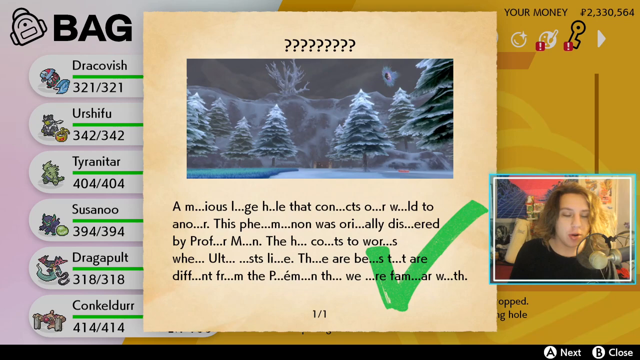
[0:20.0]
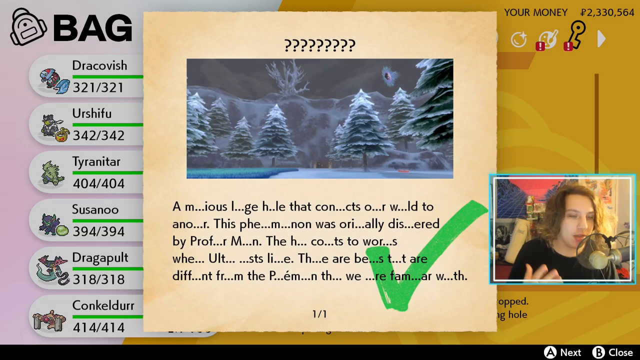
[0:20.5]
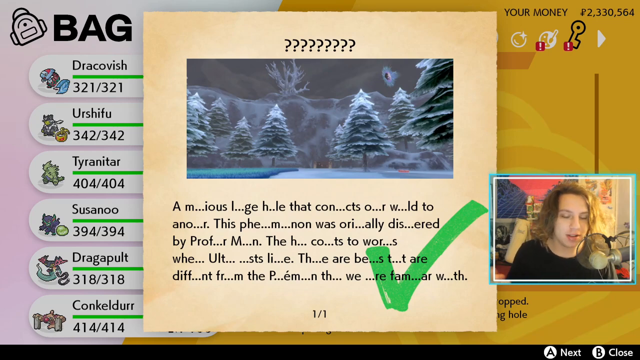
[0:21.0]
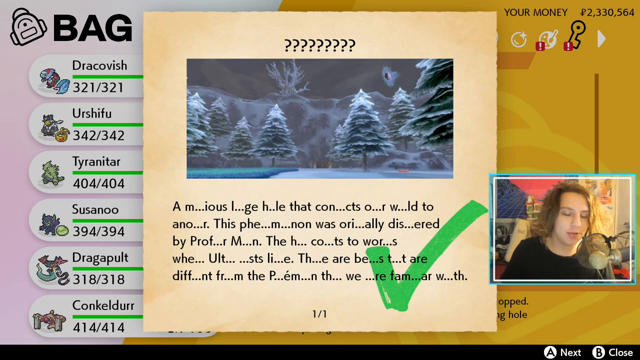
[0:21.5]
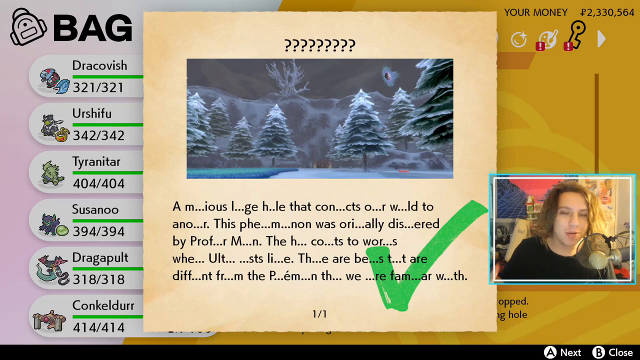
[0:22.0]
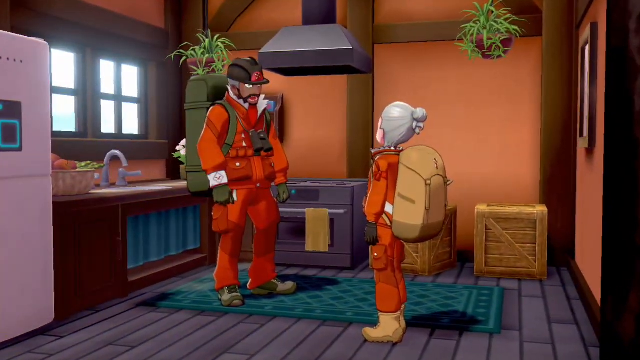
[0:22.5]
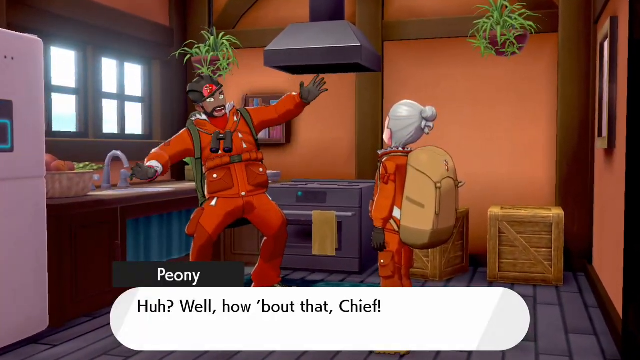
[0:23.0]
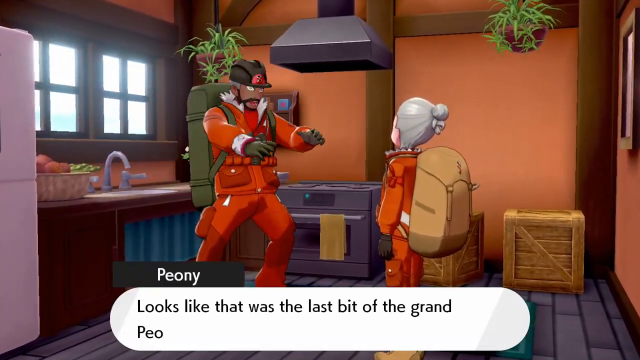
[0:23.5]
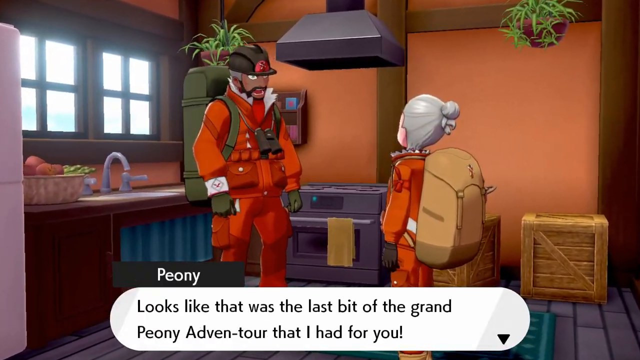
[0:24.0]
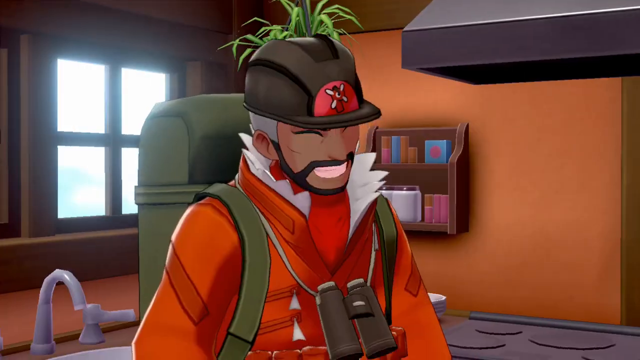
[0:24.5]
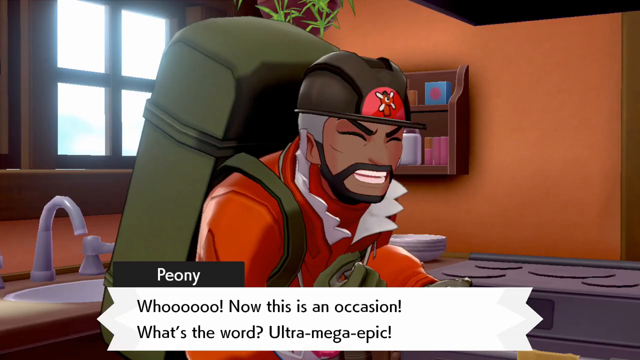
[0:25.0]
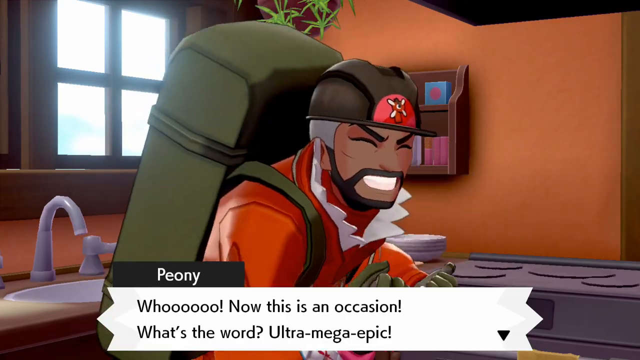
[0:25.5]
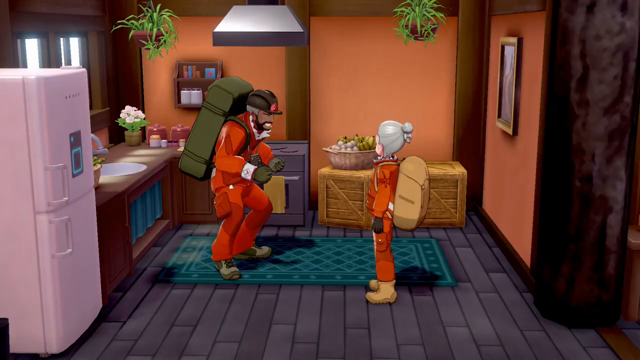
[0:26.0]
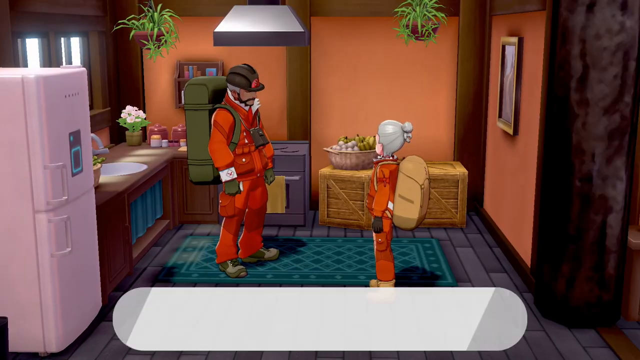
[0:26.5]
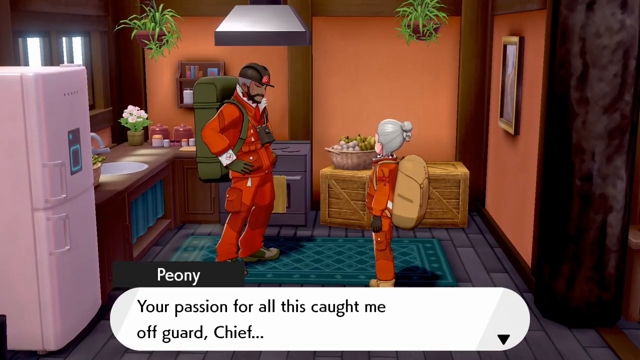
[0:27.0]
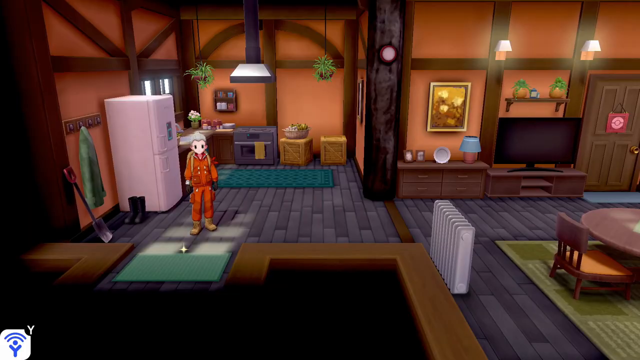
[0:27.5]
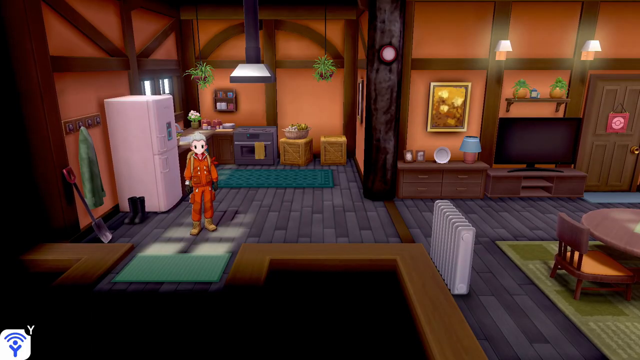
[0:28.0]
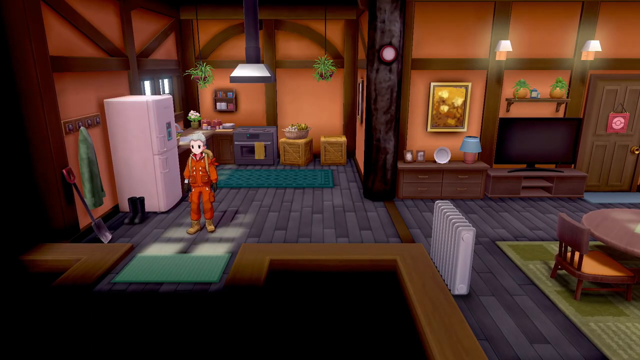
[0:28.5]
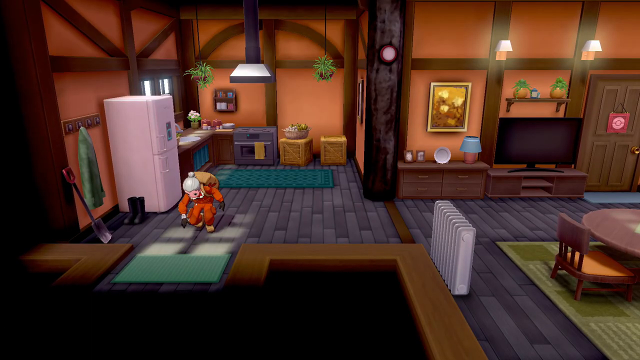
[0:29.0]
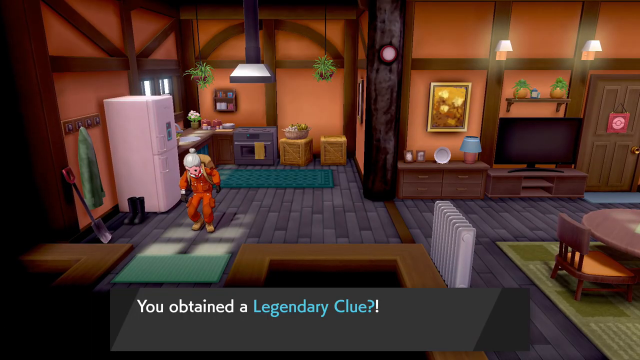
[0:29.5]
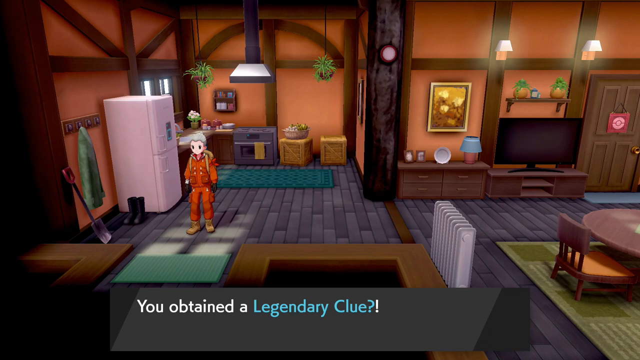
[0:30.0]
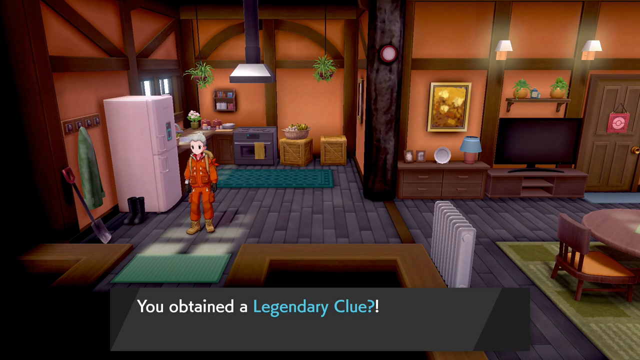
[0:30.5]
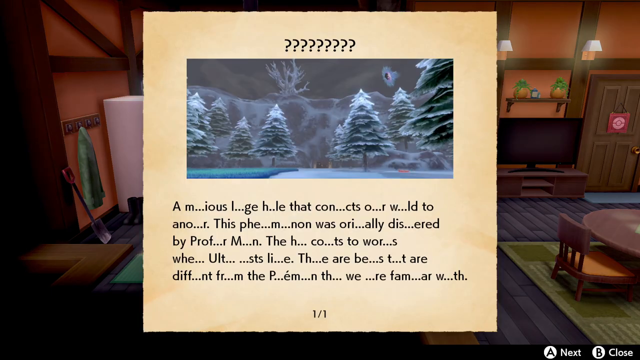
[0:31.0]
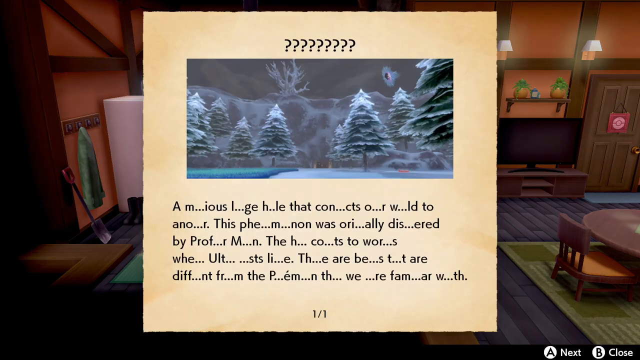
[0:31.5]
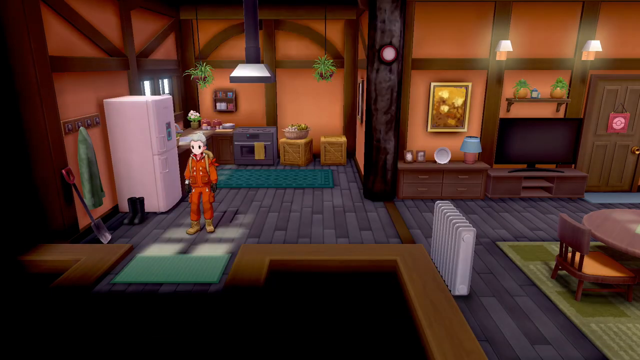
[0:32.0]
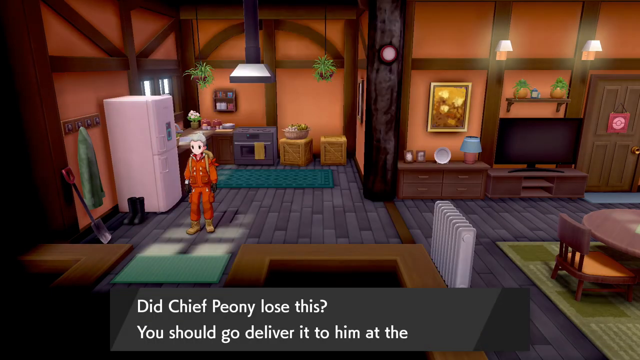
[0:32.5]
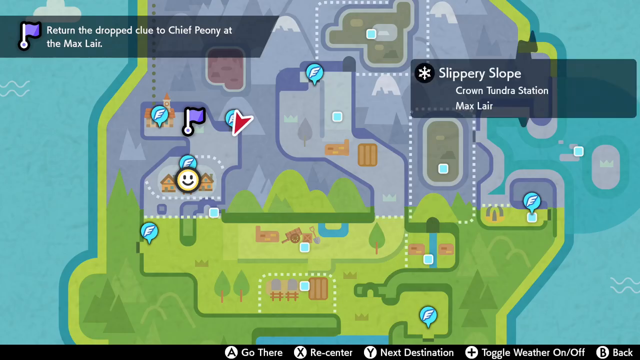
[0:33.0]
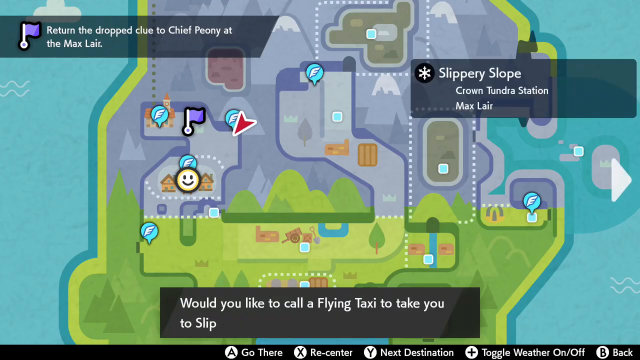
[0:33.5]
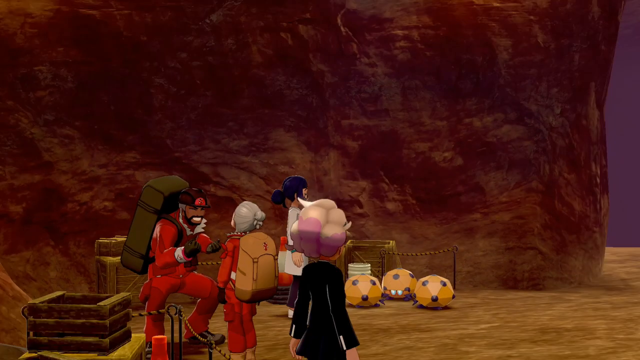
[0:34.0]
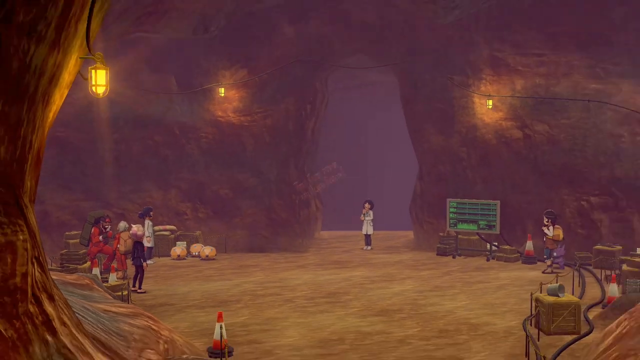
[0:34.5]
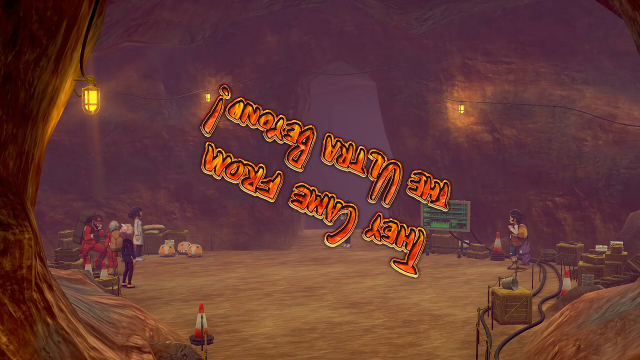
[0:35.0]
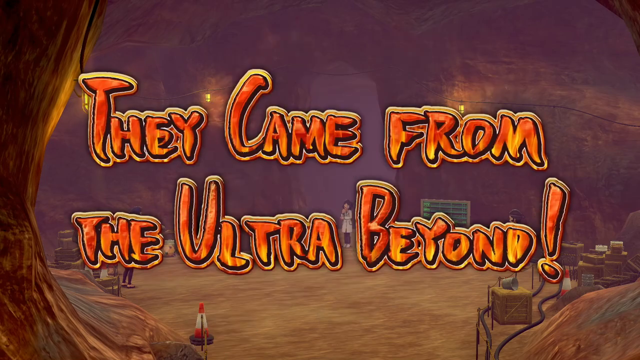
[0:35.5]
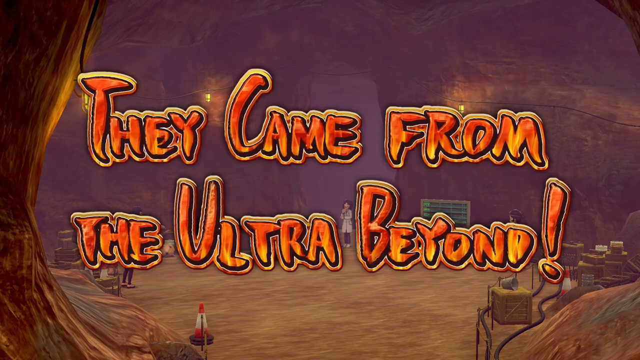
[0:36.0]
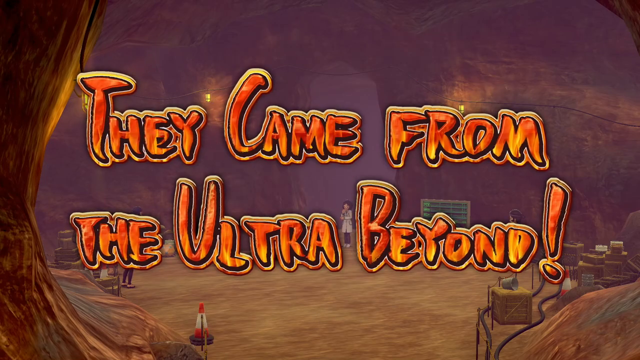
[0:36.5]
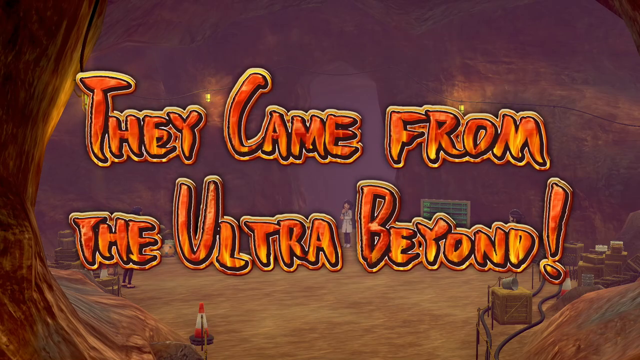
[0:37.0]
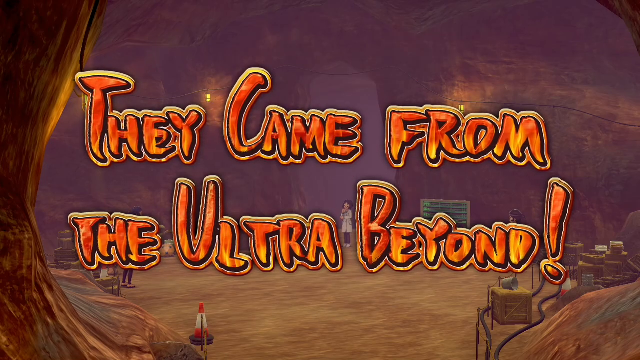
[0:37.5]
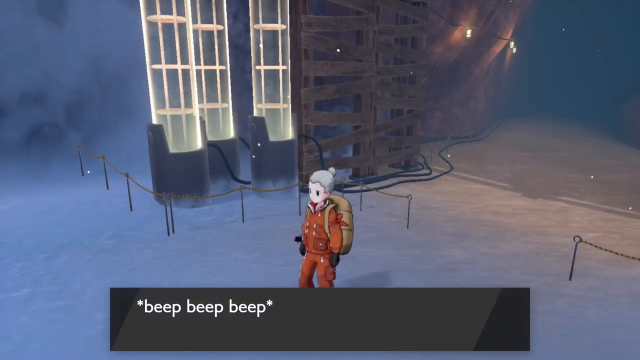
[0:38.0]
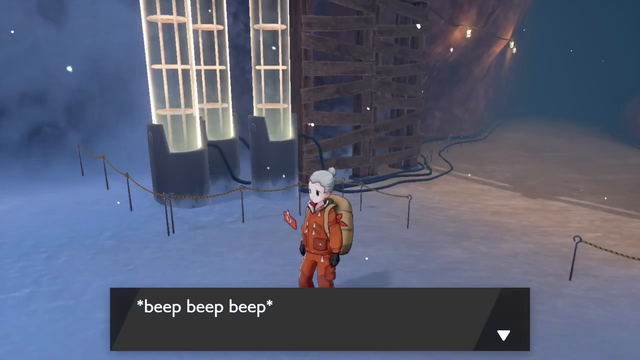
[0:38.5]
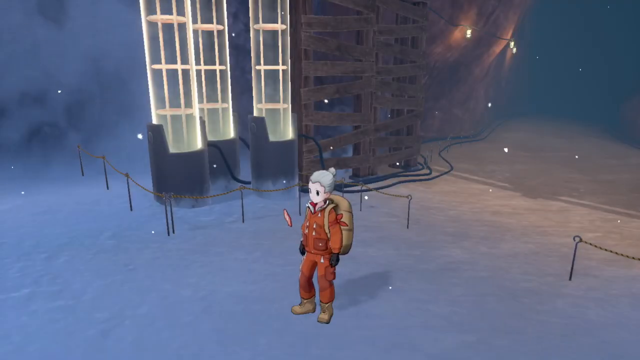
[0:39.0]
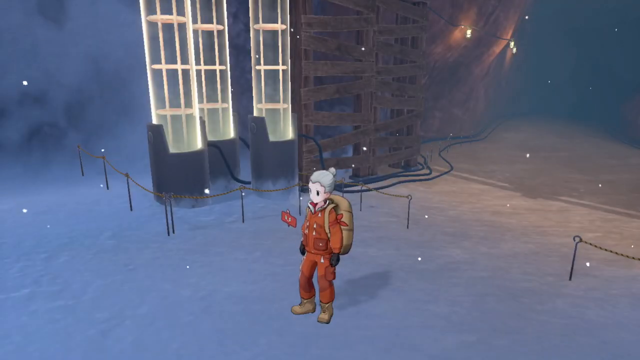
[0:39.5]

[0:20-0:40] The screen with the image of trees in the middle returns, with a bunch of question marks above it. To the left is the word "bag" and what look like six different Pokemon characters. The character on the bottom right speaks momentarily before the view changes back to the video game scenery. Two animated characters wearing orange suits and backpacks are in a kitchen, with text appearing as they speak. The one speaking is named Peony, and he says, "huh, well about that chief, looks like that was the last bit of the grand aventure." The text rotates very fast, and Peony's text is skipped through. The other character is then shown in the house wearing an orange jacket, and text reads "you obtained a legendary clue," referring to the document with the trees on it. The map is shown, and the game cuts to a scene in a cave with the large orange text "they came from the ultra beyond." The character is then outside in the snow, with smoke blowing from the character's mouth.